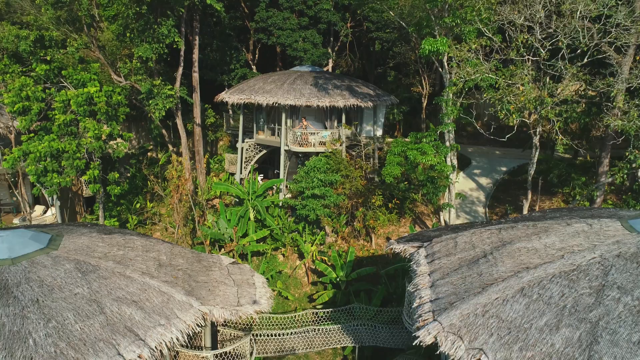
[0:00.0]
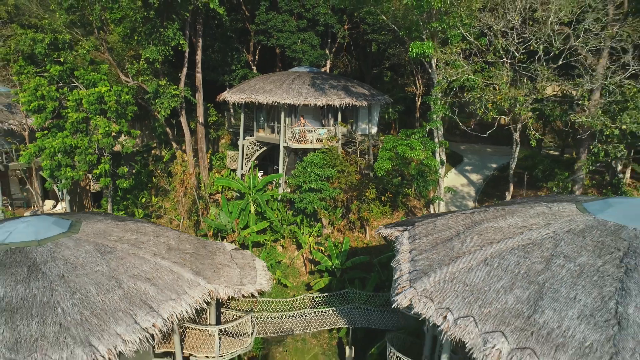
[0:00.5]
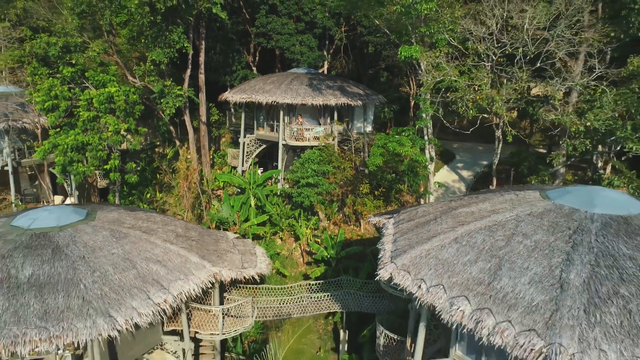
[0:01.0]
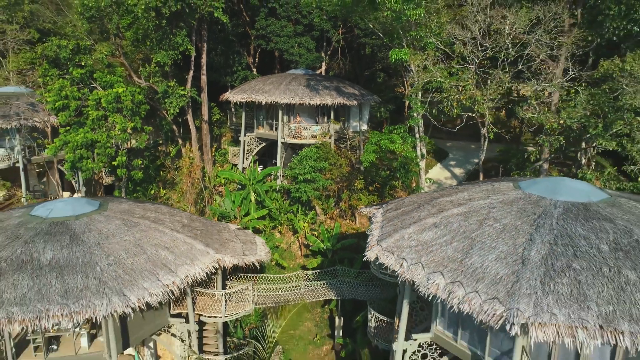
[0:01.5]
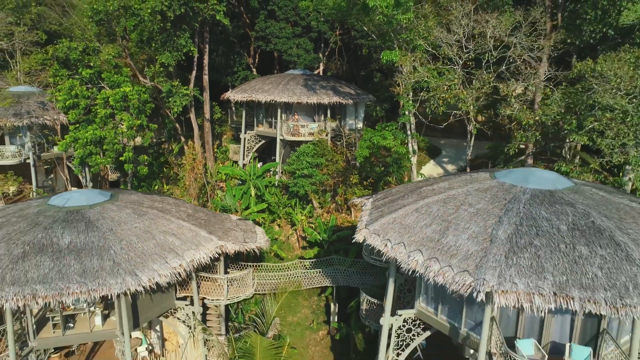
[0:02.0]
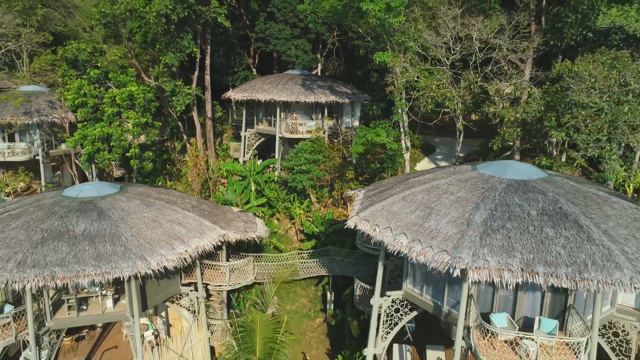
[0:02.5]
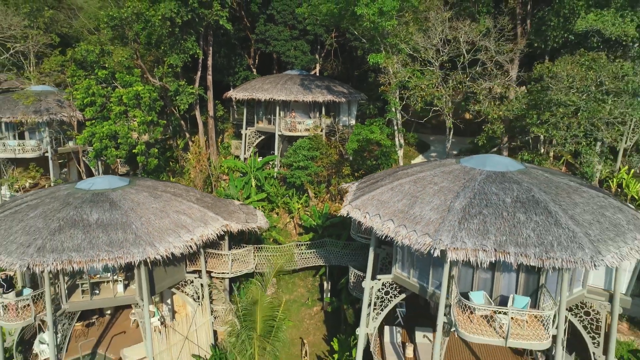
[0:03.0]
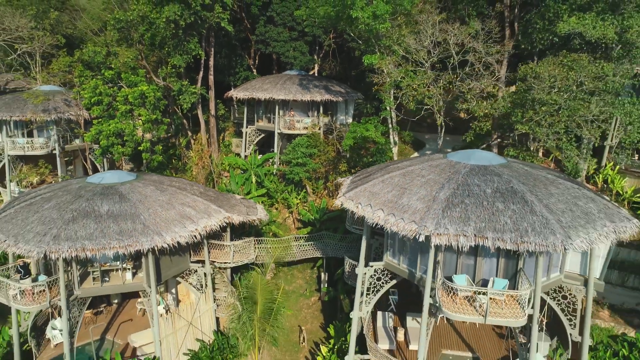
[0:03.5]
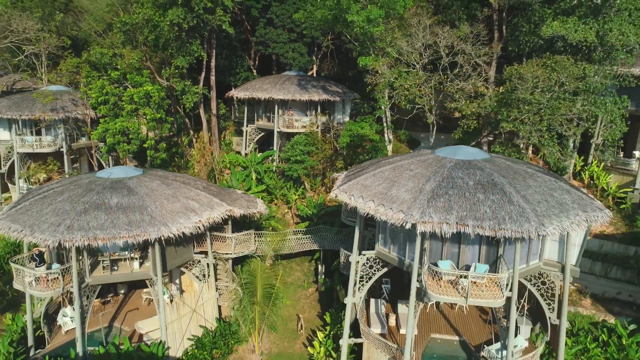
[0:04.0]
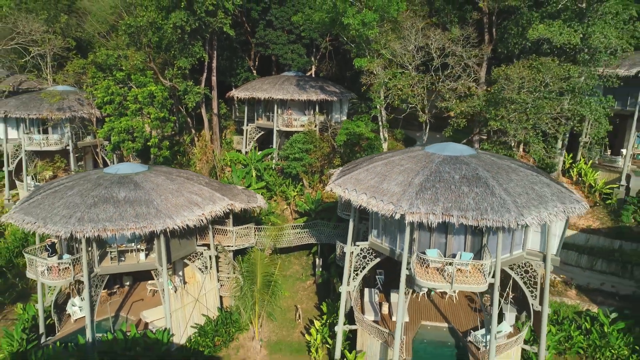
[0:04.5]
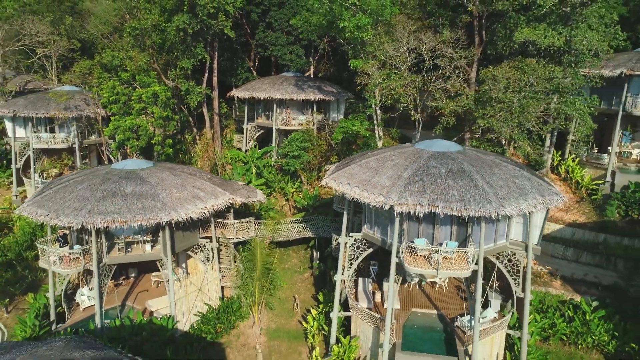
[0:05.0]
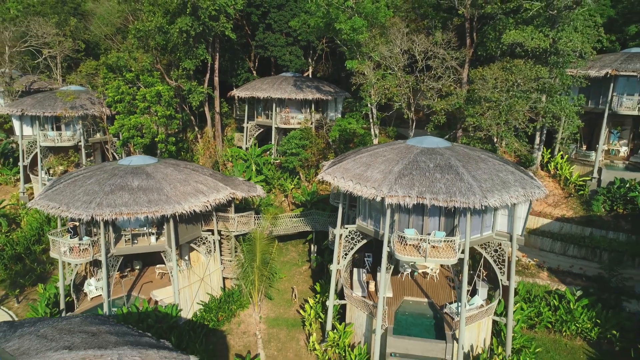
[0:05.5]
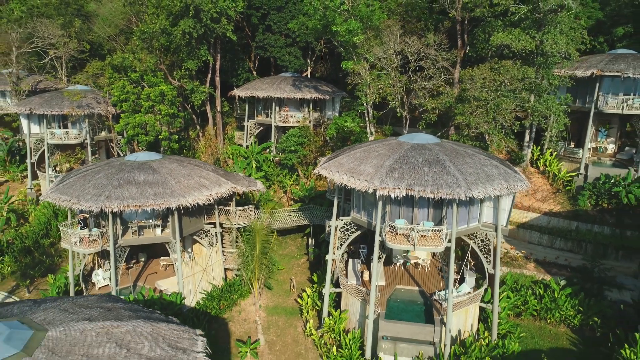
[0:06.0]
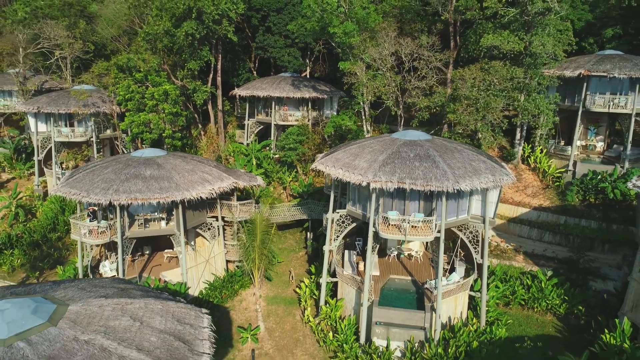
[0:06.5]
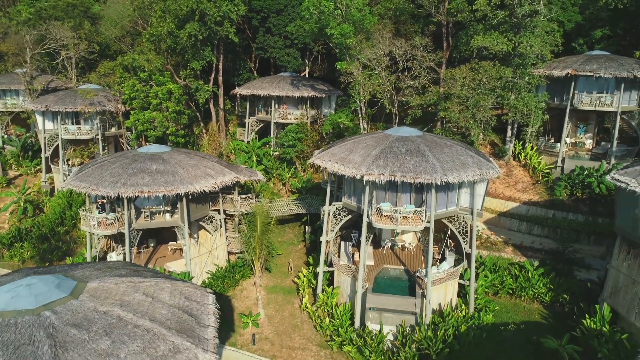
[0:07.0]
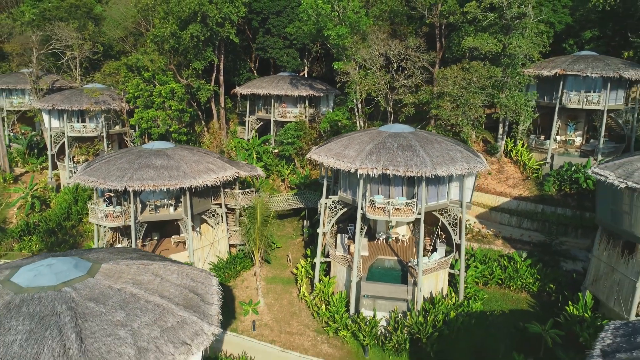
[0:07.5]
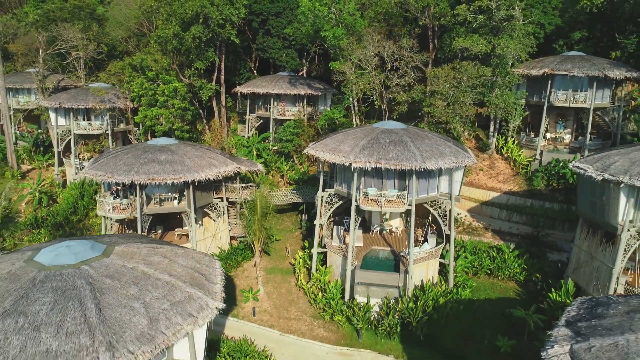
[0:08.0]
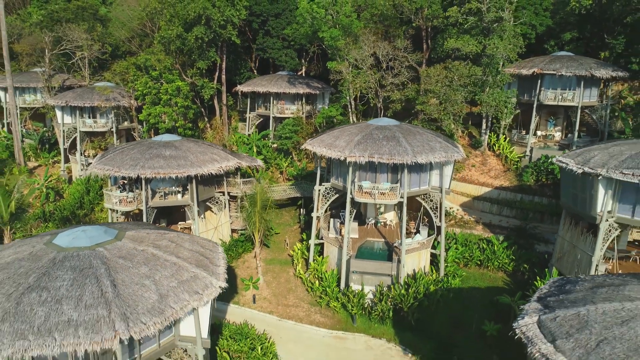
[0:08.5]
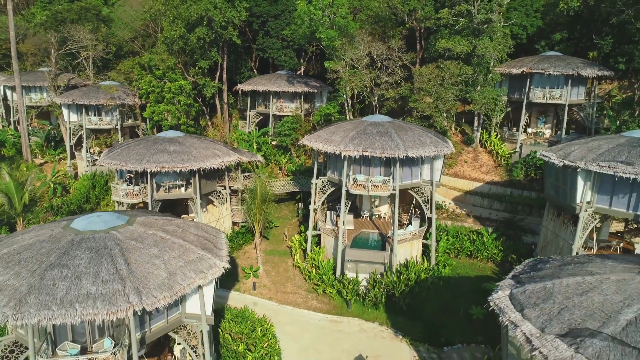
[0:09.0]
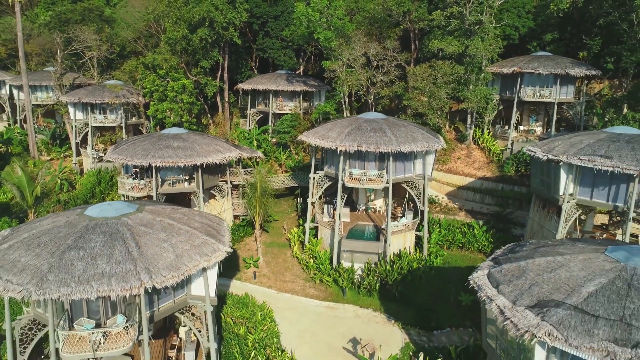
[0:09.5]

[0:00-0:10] An aerial view shows multiple huts on tall poles. The huts are multi-storied and seem to be recreational rather than functional homes. Each has a living area on top surrounded by a balcony, with gray straw roofs. Underneath the living area, toward the ground, each hut has a pool or hot tub area with outdoor seating, so each one has its own recreational facilities. The huts are built closely together, with paved paths on the ground around them, and some of them are connected on the second floor by rope and wooden bridges.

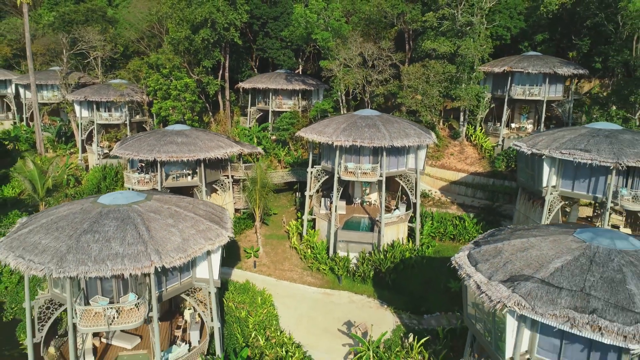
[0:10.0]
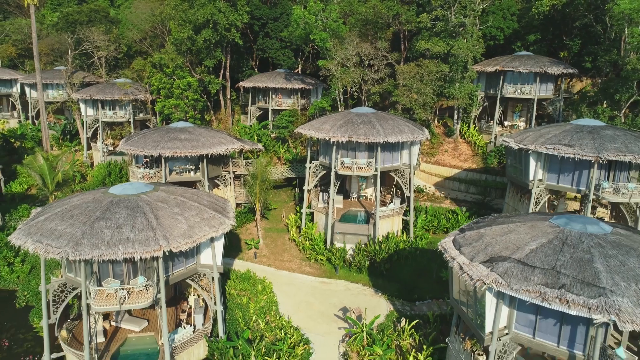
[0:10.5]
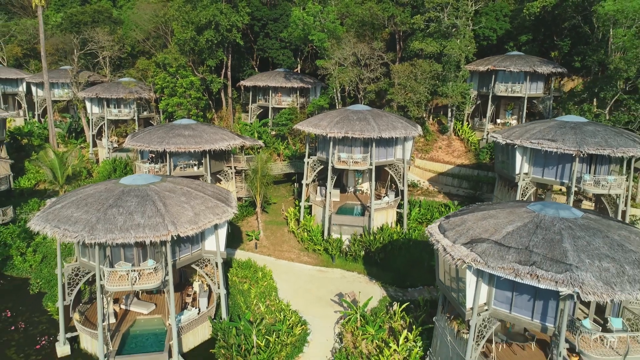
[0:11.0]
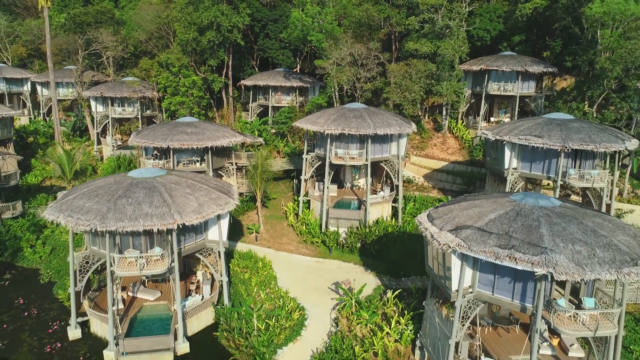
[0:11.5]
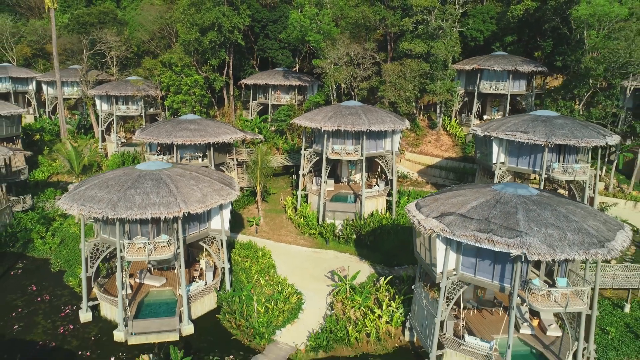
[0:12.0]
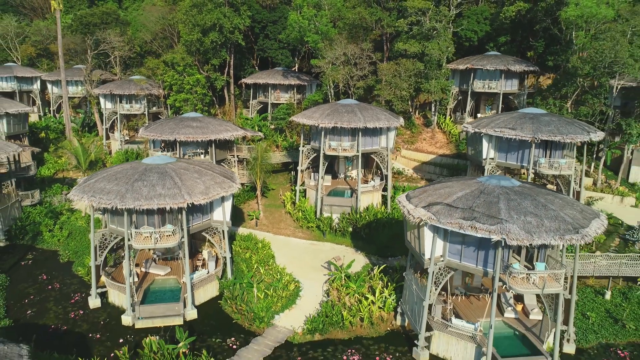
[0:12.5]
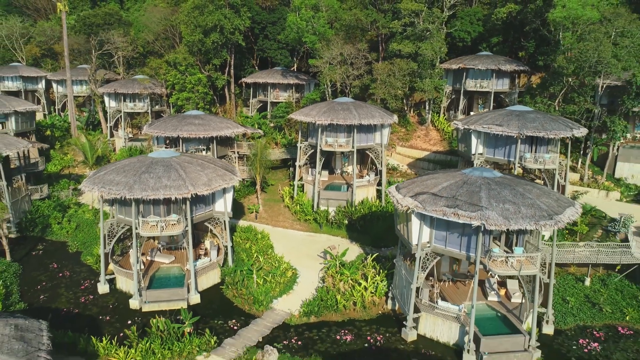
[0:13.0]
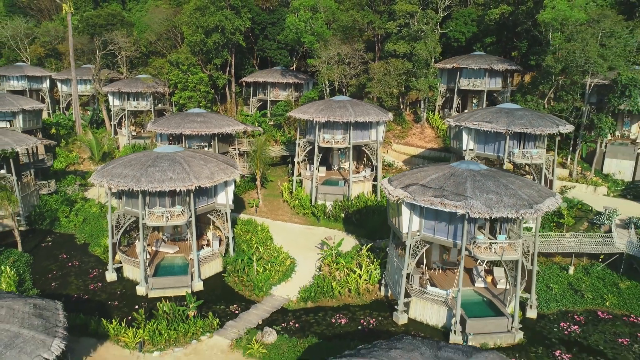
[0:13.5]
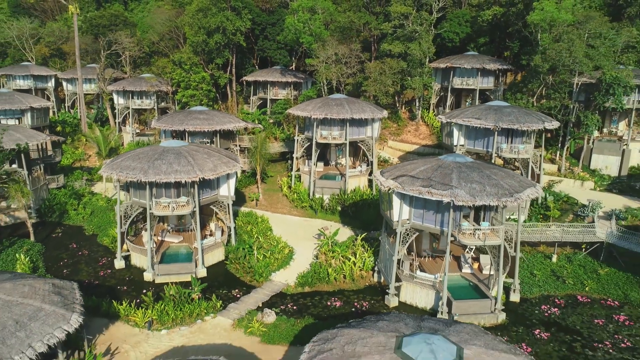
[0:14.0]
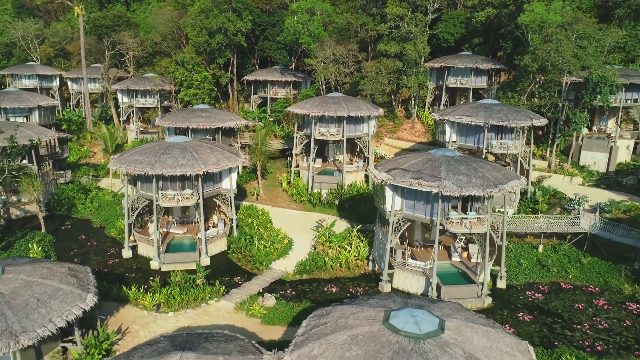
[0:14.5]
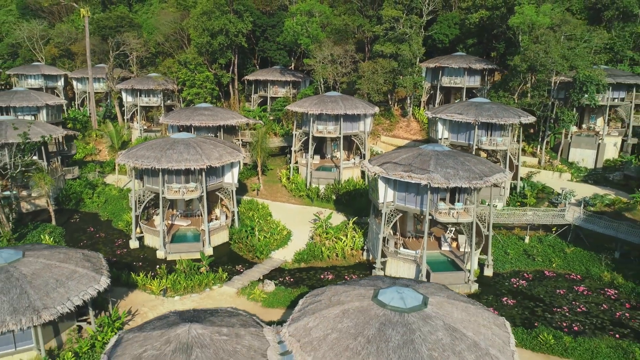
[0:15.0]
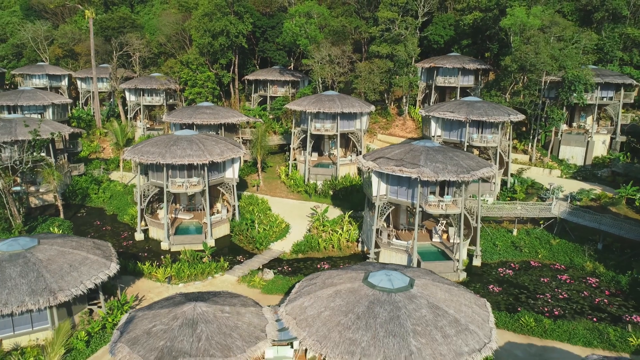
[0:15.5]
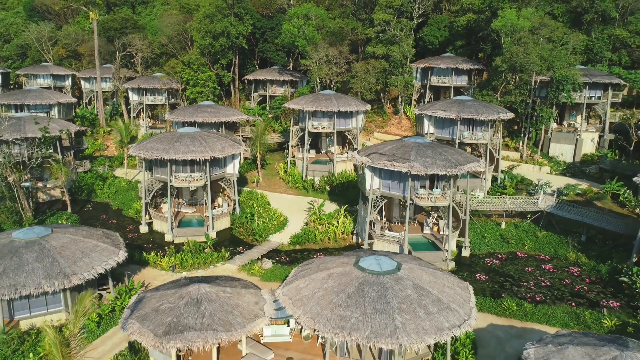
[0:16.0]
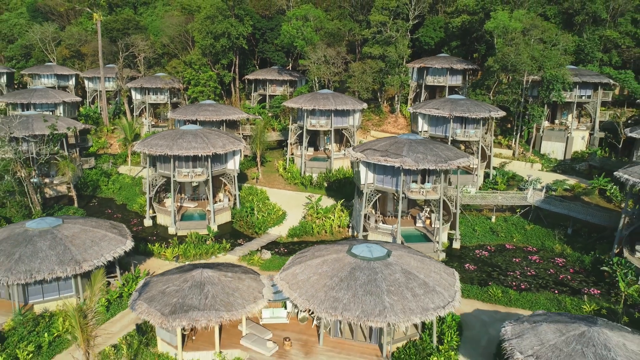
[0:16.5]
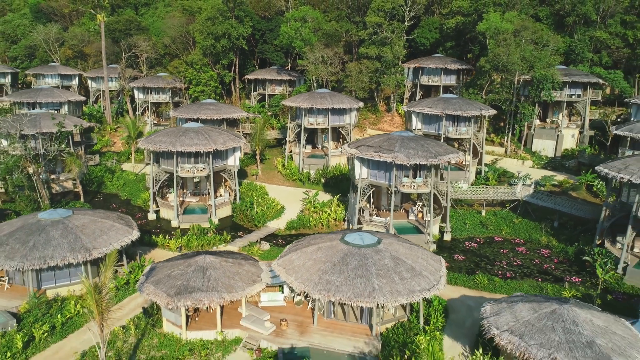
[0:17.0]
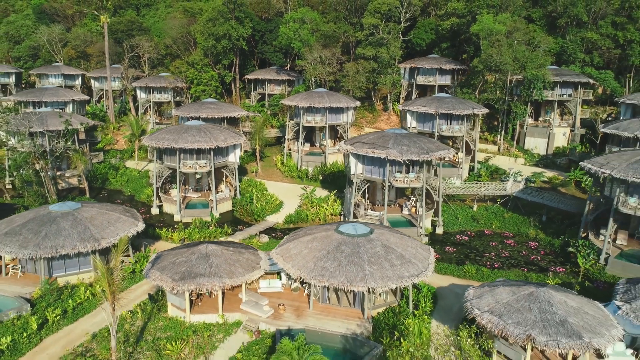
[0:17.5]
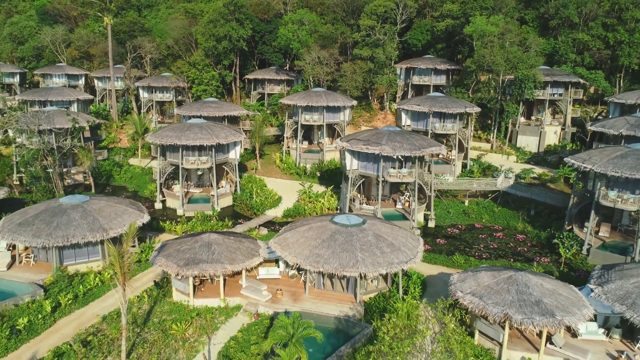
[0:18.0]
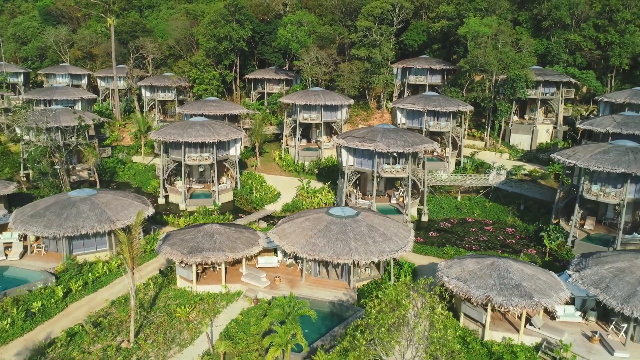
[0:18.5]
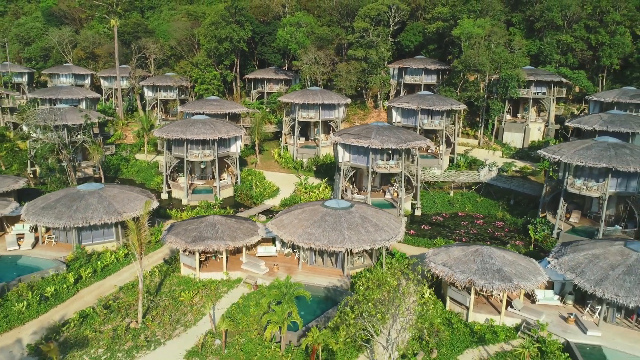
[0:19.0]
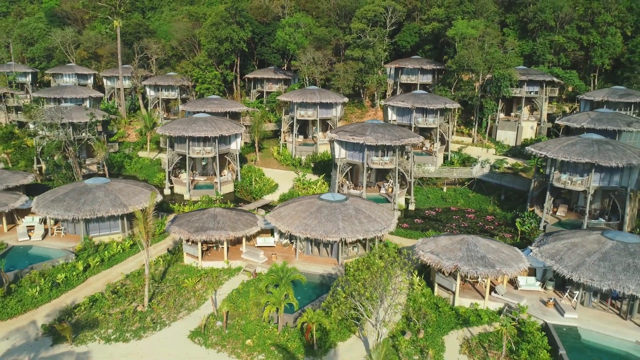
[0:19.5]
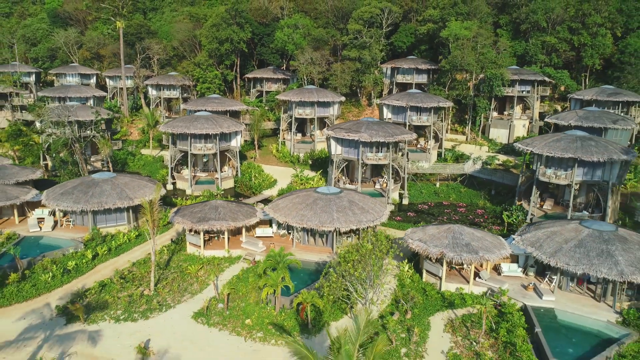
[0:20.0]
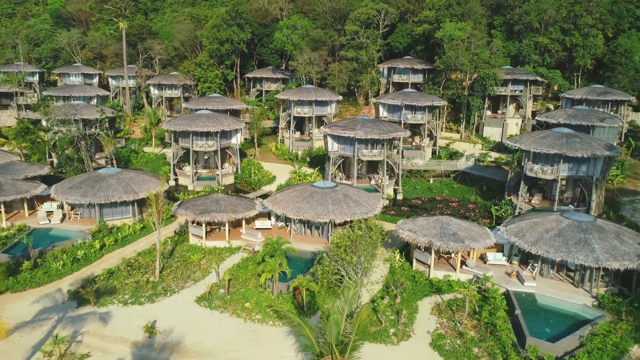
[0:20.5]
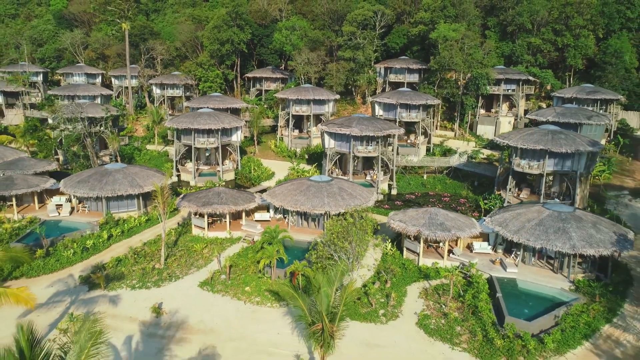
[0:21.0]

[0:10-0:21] A slow overhead panning shot moves over multiple recreational huts, most likely part of some kind of resort or hotel. The huts are two stories, and some of them are connected by wooden and rope bridges. The upper story is some kind of residential or living space, most likely the equivalent of hotel rooms, and the bottom floor holds what looks to be a small pool, hot tub or jacuzzi with various outdoor seating. The huts are all identical except that some are connected with bridges and some are not. As the camera slowly pans out, larger pool areas come into view, apparently more for public use, with similar-looking single-story huts.